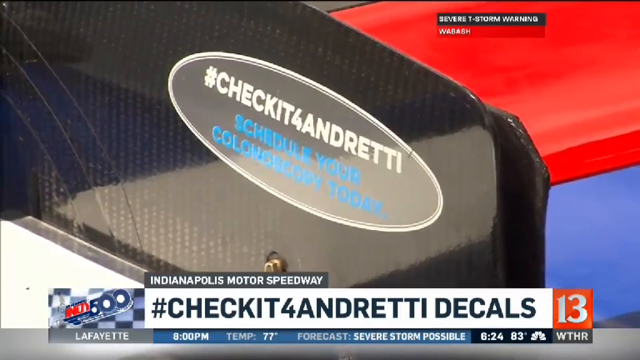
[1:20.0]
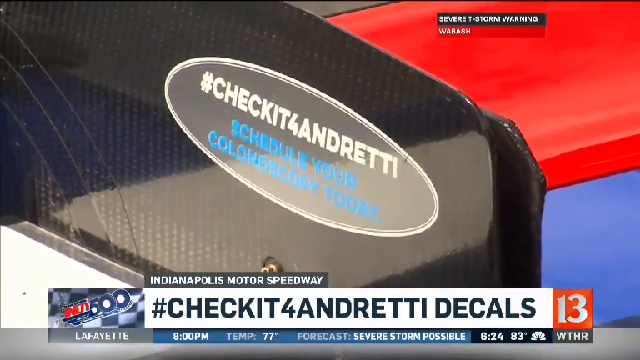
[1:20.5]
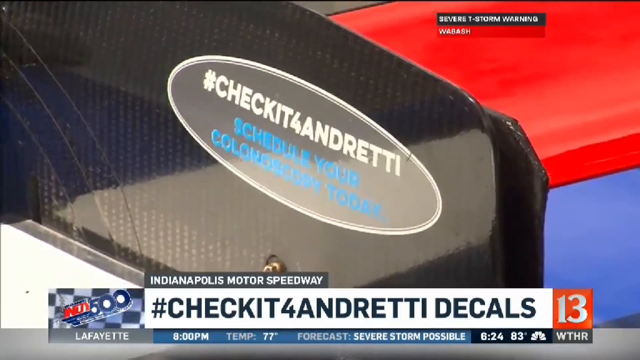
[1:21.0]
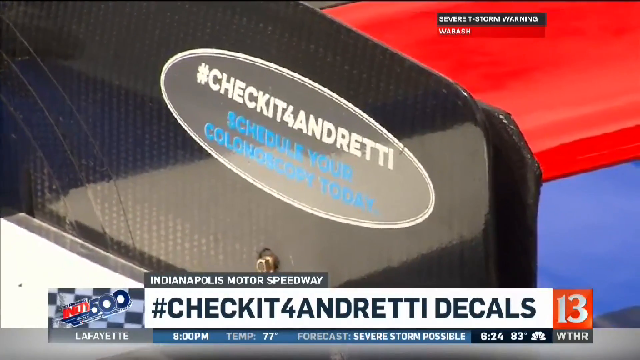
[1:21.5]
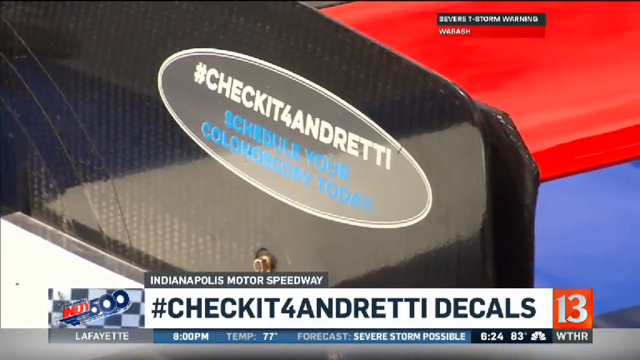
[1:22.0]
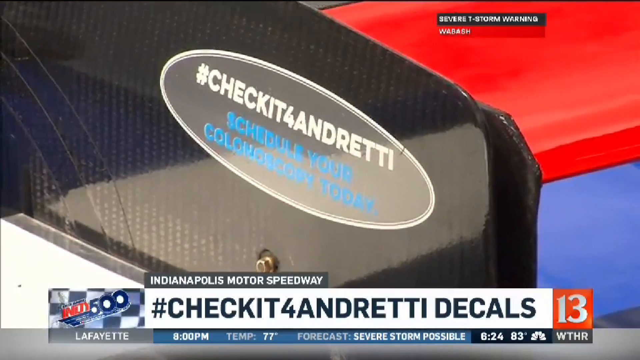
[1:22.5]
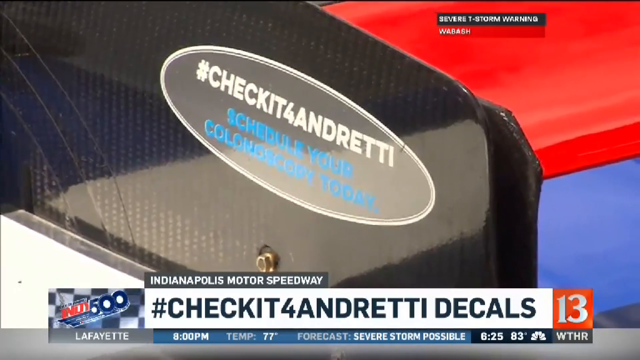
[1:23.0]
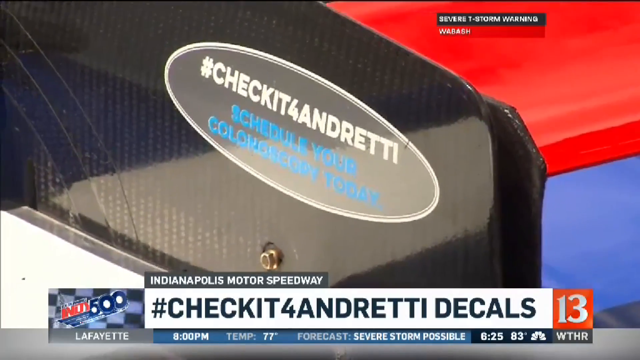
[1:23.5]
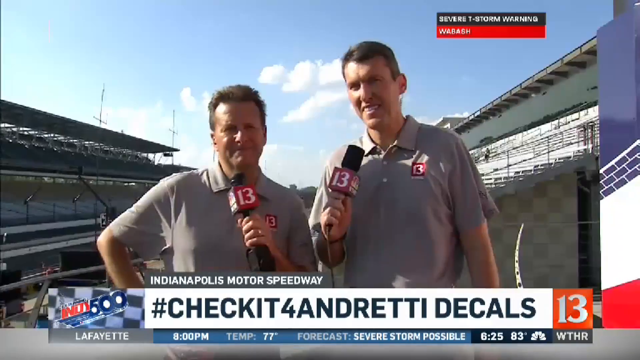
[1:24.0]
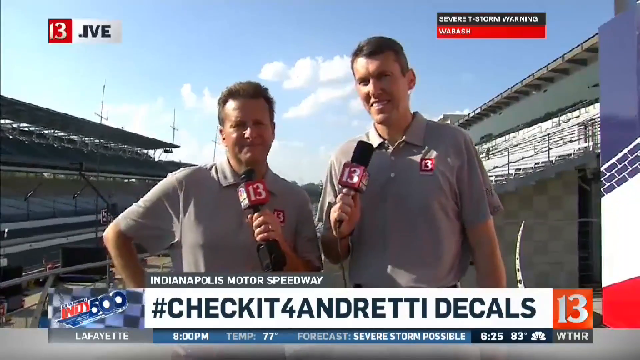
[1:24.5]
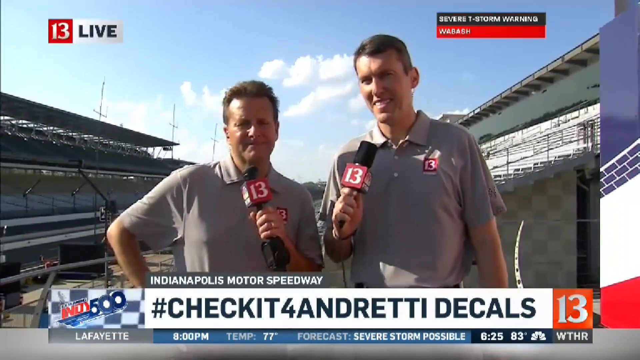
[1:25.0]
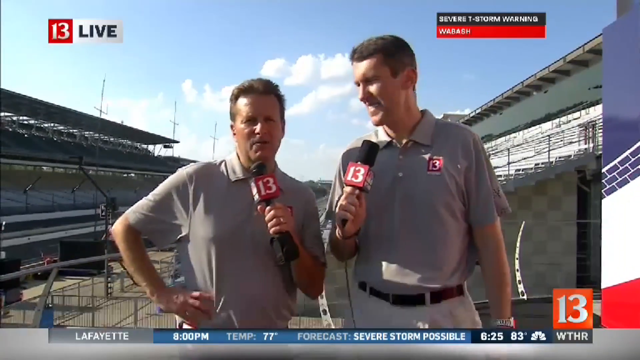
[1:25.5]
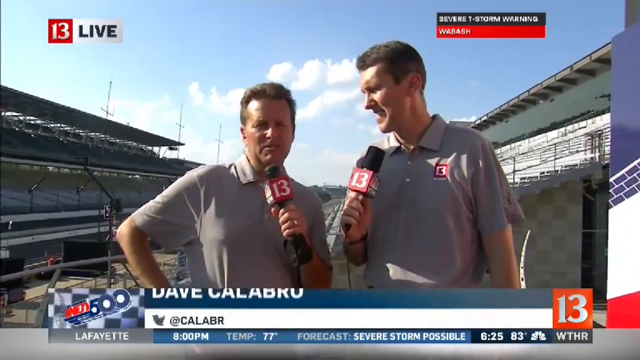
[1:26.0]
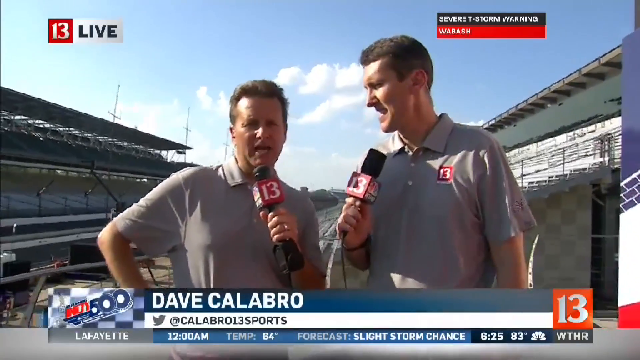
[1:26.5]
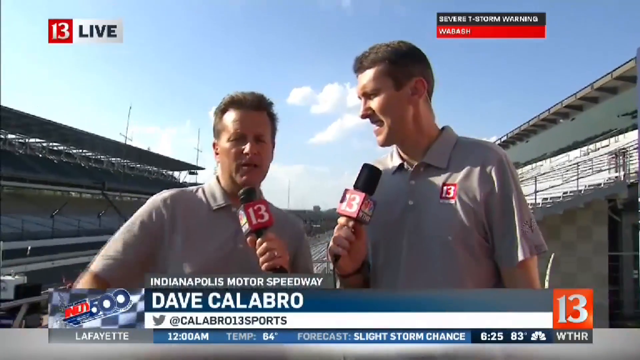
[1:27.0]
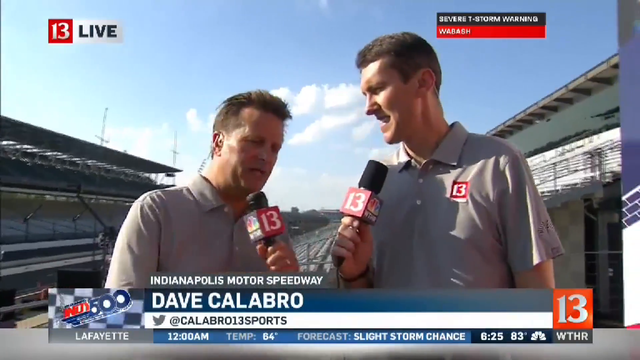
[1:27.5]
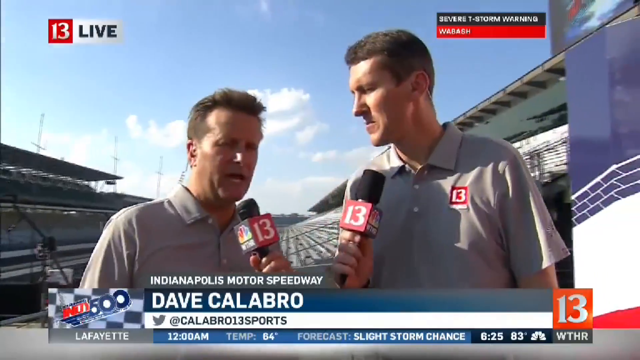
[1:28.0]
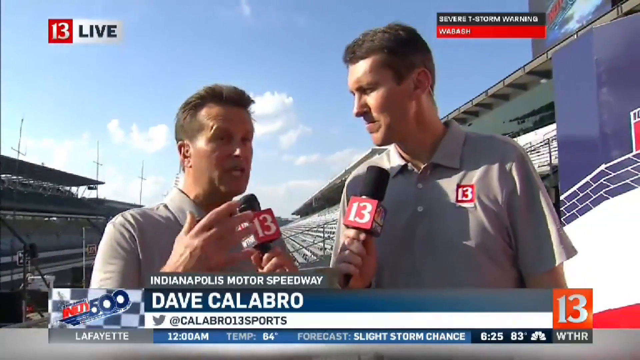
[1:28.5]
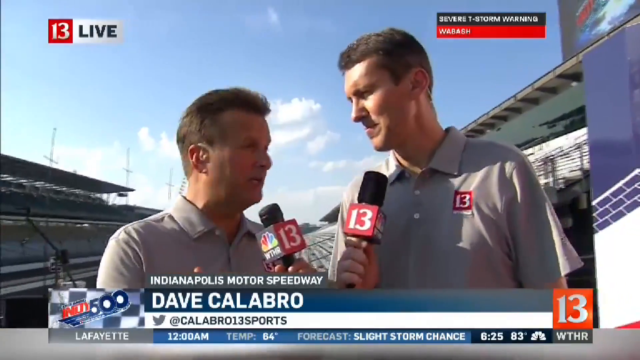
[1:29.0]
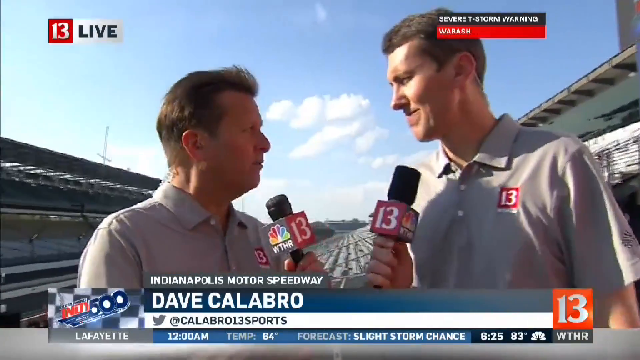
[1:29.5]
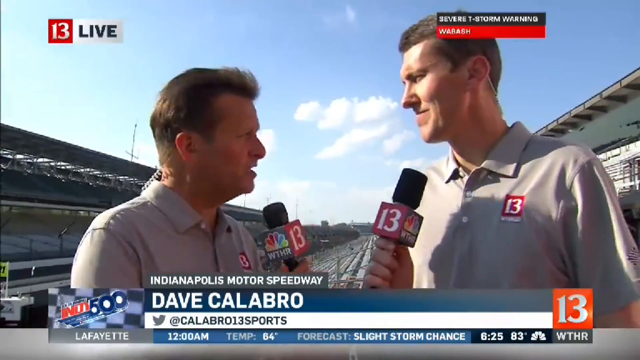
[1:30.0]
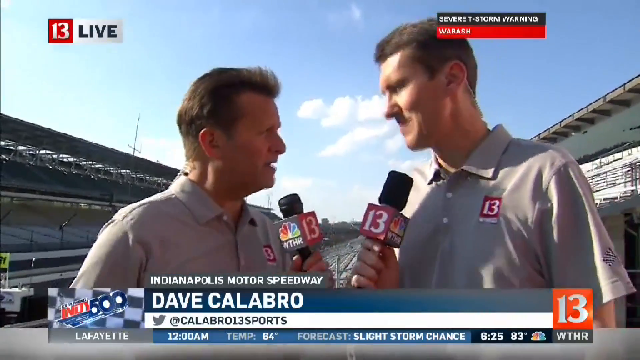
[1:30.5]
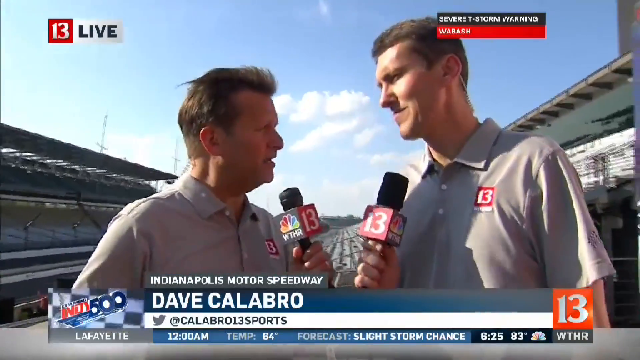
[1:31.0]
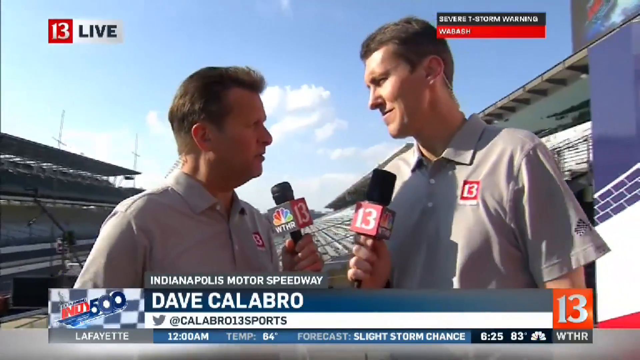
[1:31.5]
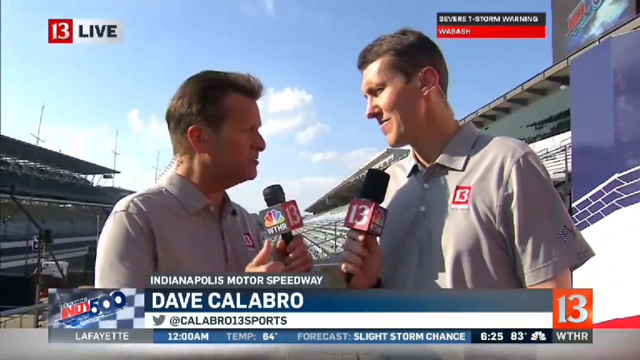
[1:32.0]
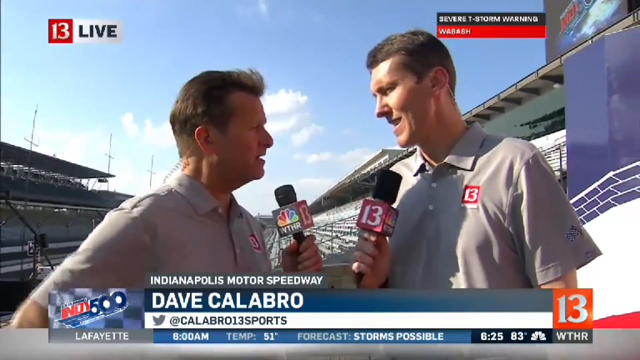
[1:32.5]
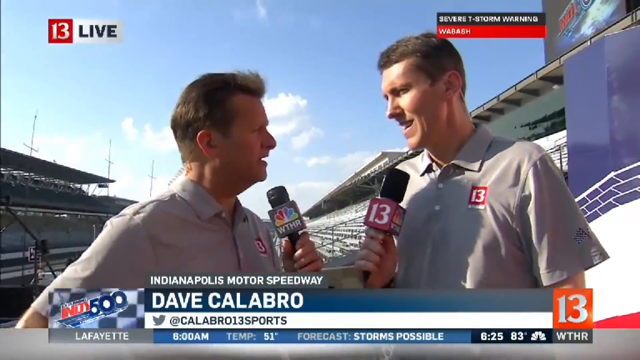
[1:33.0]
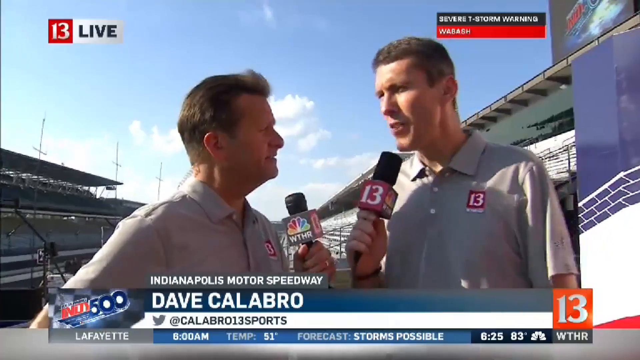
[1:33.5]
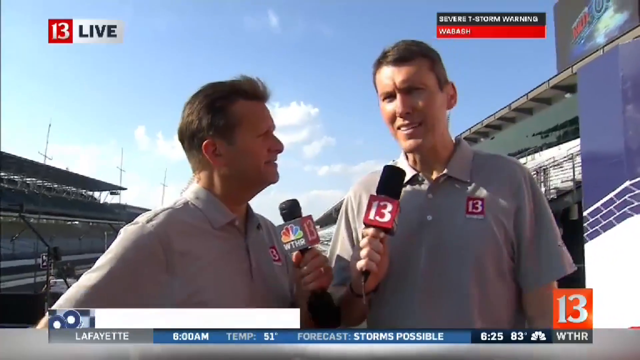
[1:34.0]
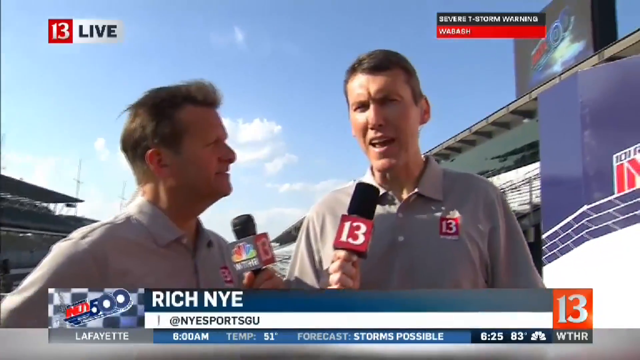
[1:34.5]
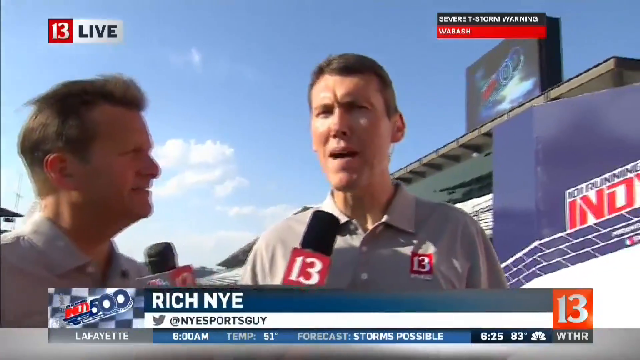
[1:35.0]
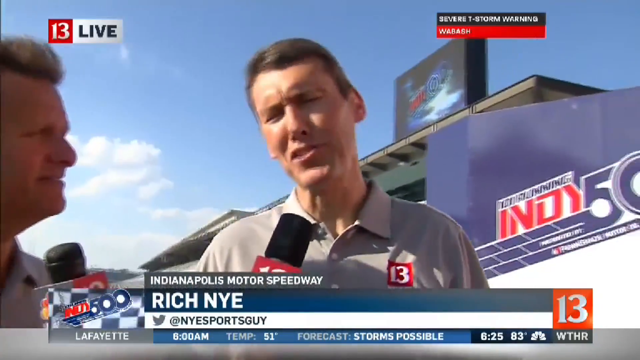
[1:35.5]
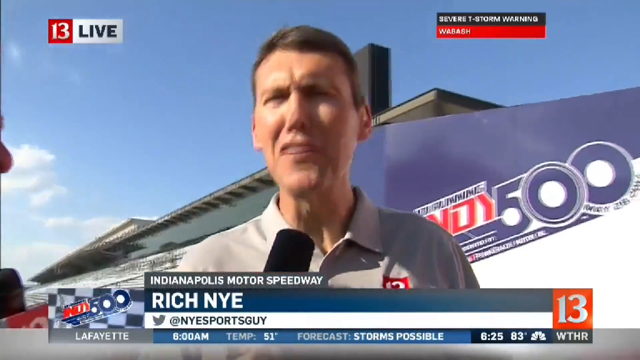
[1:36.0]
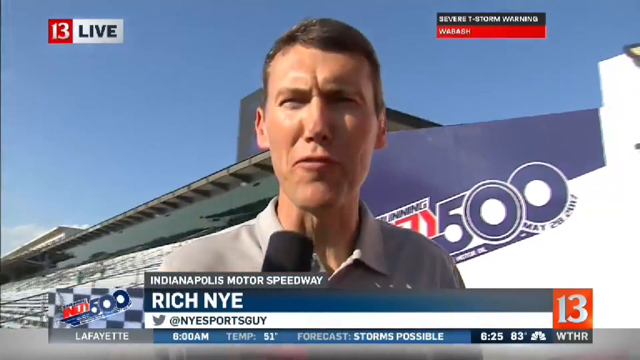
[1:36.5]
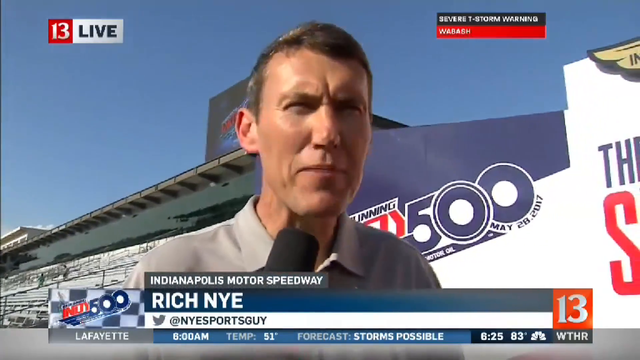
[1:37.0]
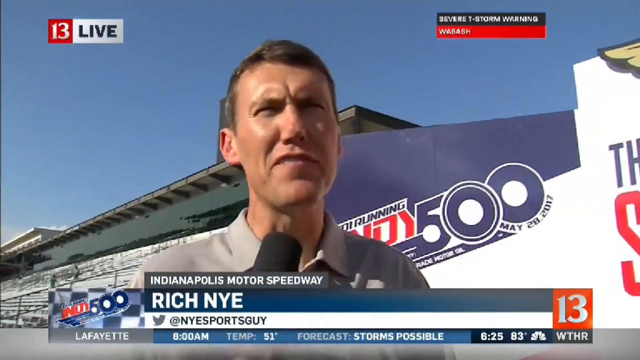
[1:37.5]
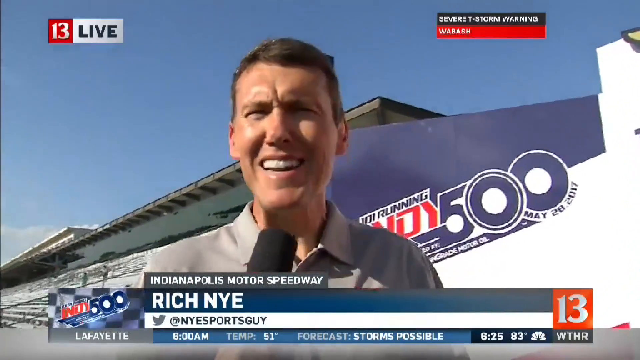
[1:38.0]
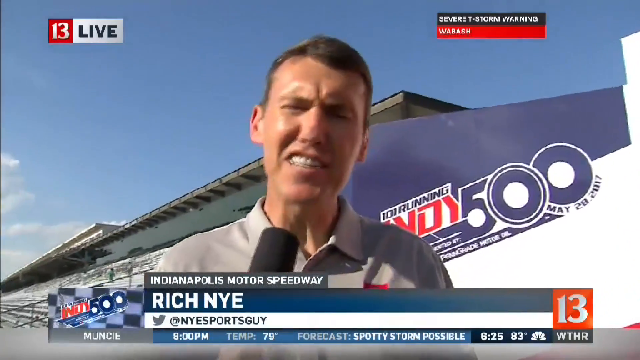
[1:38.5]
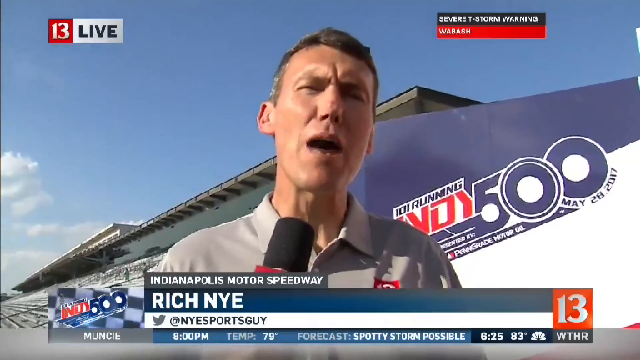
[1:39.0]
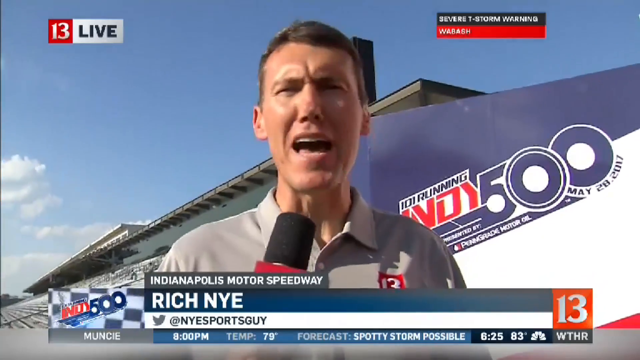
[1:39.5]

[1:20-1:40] A closer look at the car shows the sticker reading "#checkit4Andretti" and "schedule your", followed by two unreadable words in light blue. The video then moves to two reporters, Dave Calabro and Rich Nye, who seem to be speaking about the Indianapolis Motor Speedway races, the Indy 500. Both wear grey channel 13 shirts and hold black microphones with a red square bearing the number 13; they are smiling and seem to be enjoying the conversation. The banner changes to the forecast for "Lafayette 8 p.m", a temperature of 77 degrees and "severe storm possibles". The shot ends with only Rich Nye on screen.